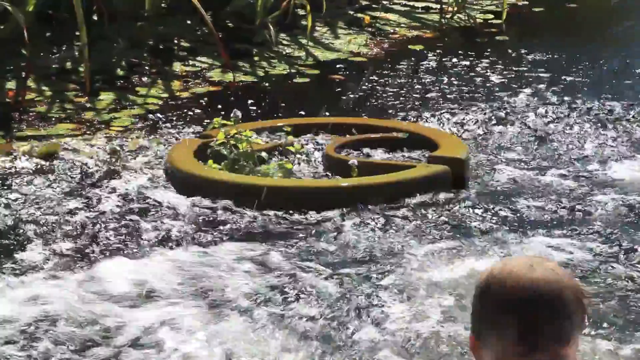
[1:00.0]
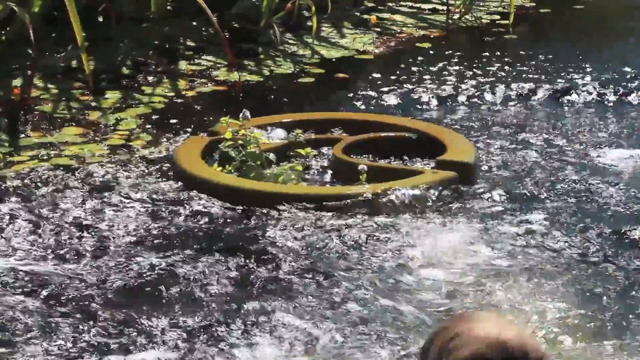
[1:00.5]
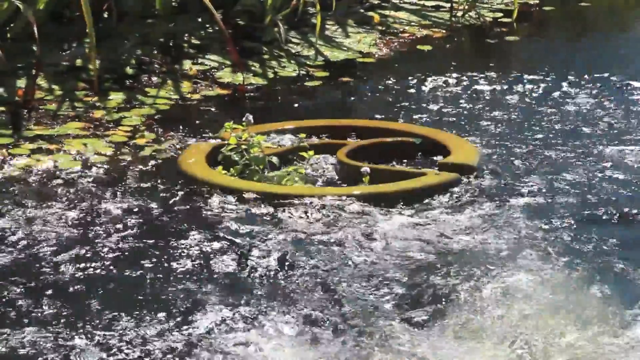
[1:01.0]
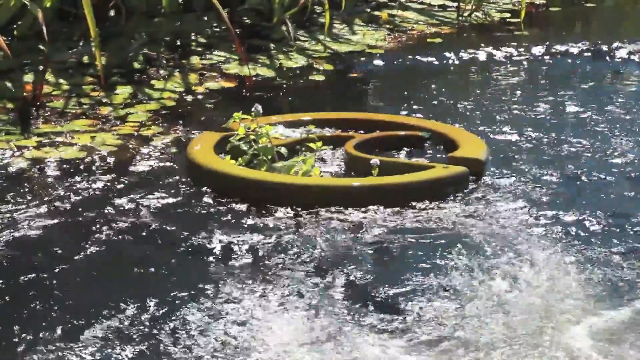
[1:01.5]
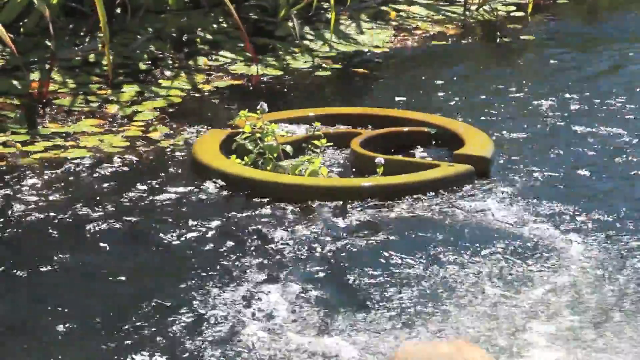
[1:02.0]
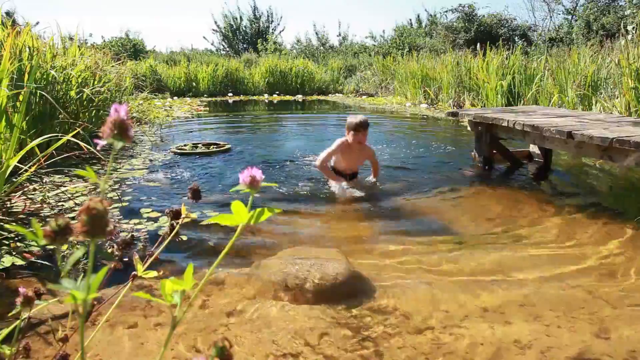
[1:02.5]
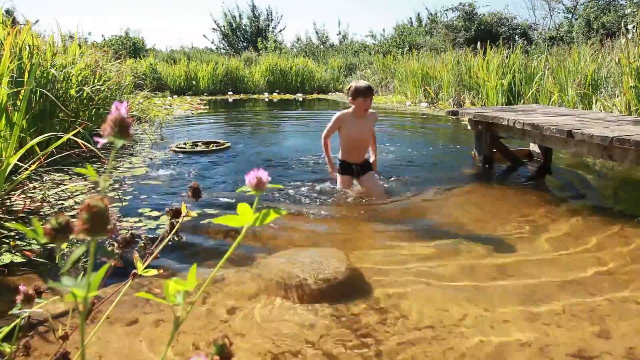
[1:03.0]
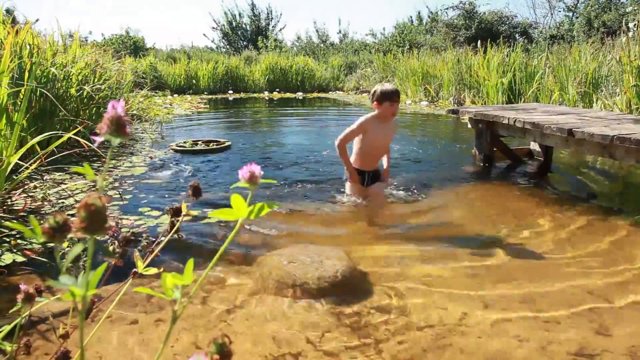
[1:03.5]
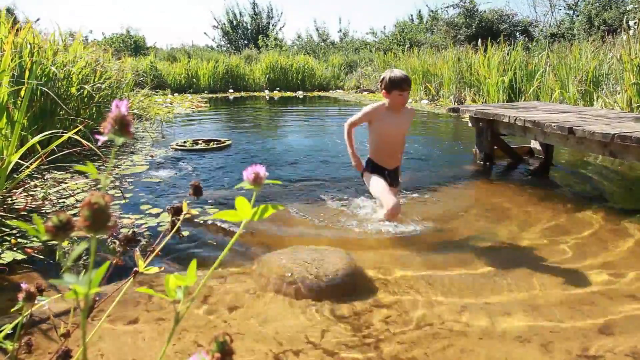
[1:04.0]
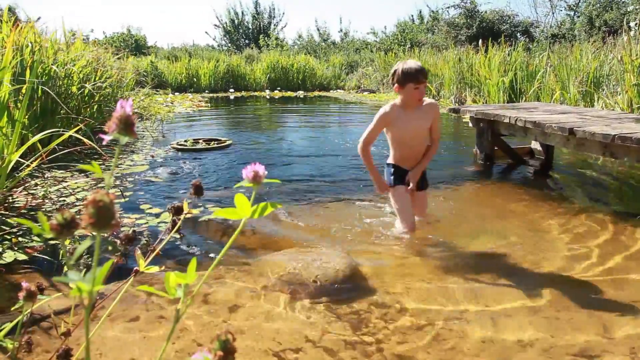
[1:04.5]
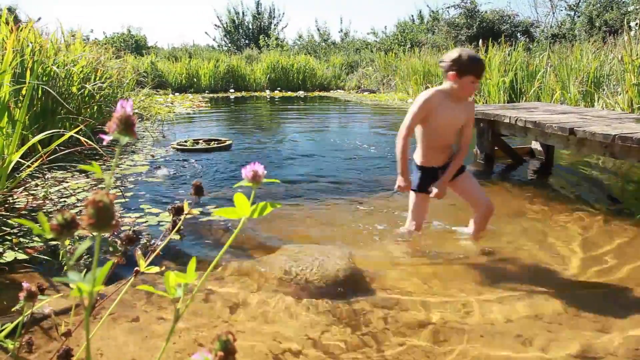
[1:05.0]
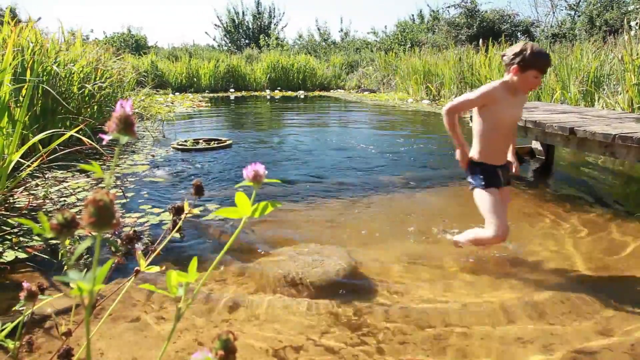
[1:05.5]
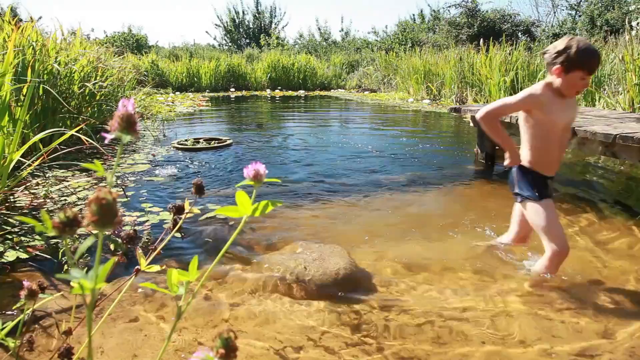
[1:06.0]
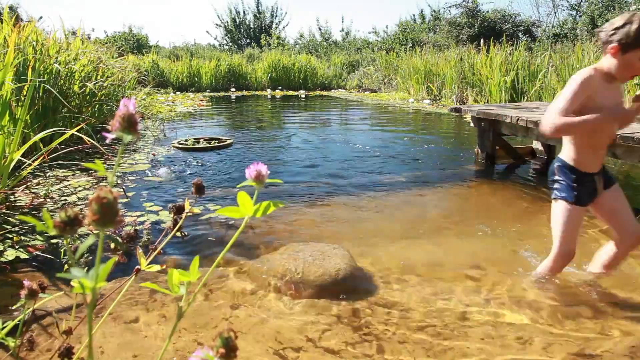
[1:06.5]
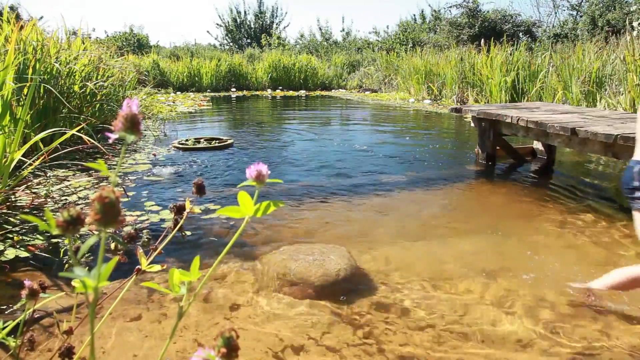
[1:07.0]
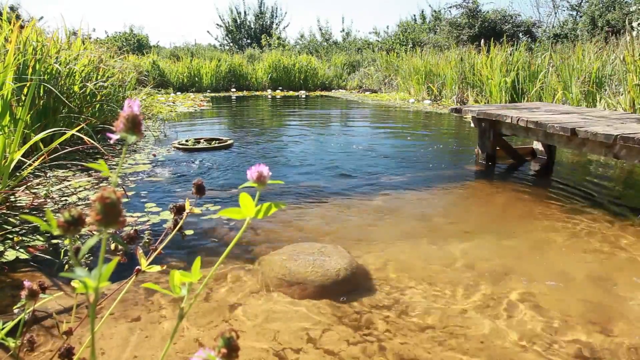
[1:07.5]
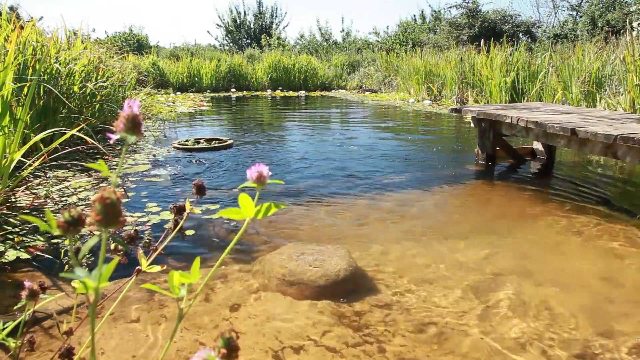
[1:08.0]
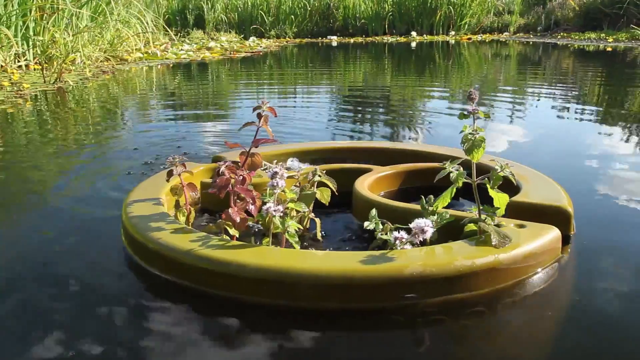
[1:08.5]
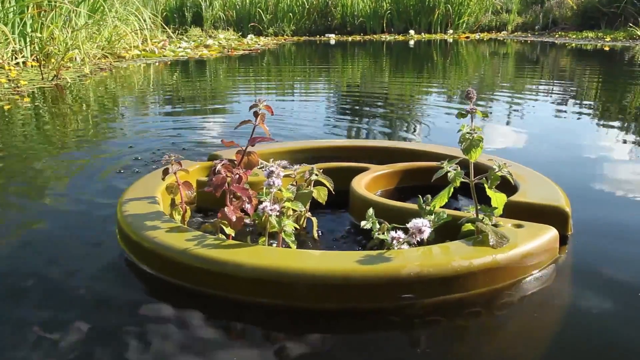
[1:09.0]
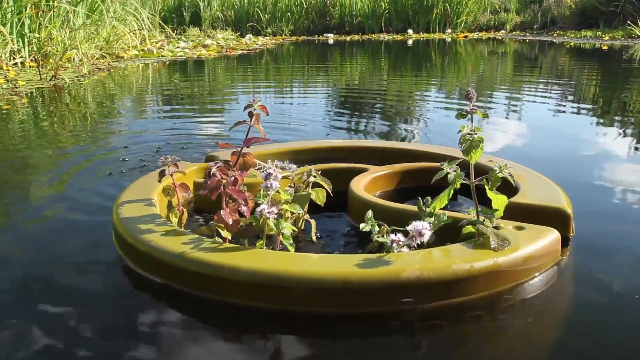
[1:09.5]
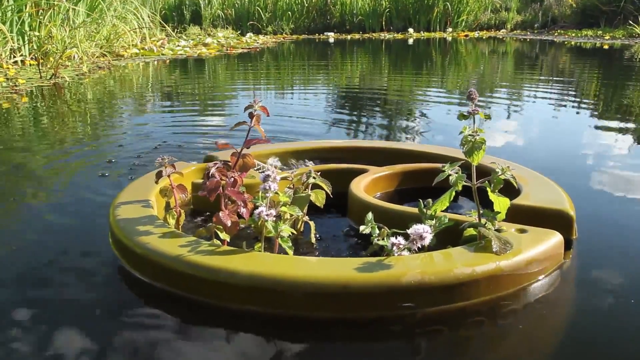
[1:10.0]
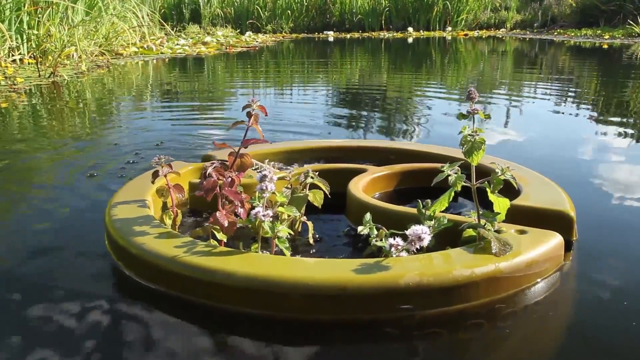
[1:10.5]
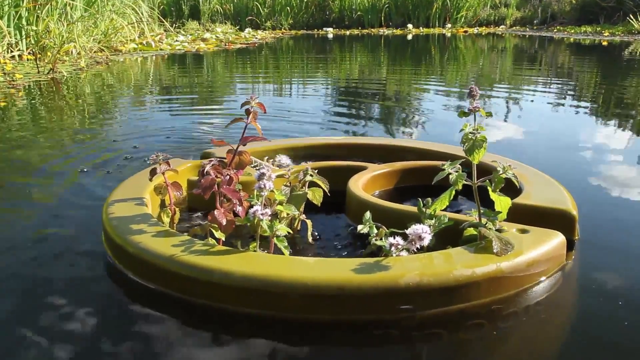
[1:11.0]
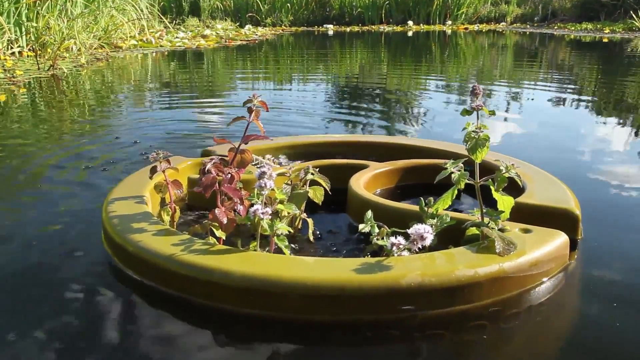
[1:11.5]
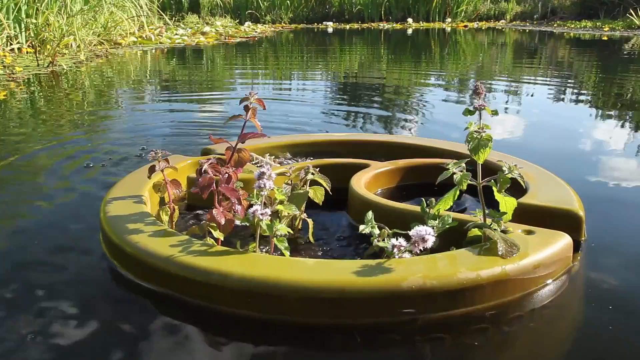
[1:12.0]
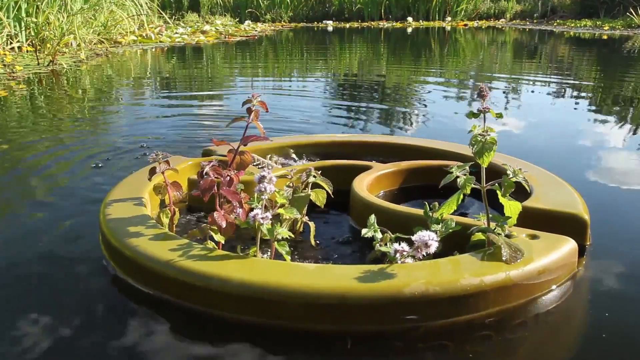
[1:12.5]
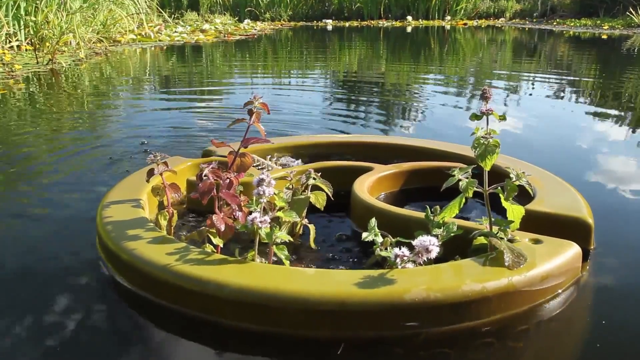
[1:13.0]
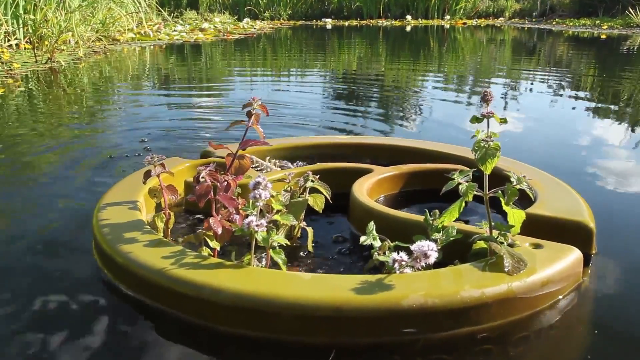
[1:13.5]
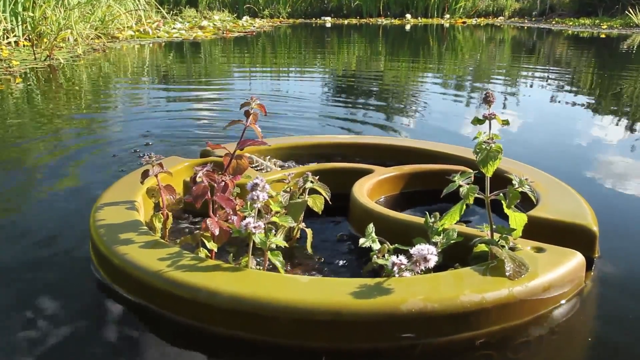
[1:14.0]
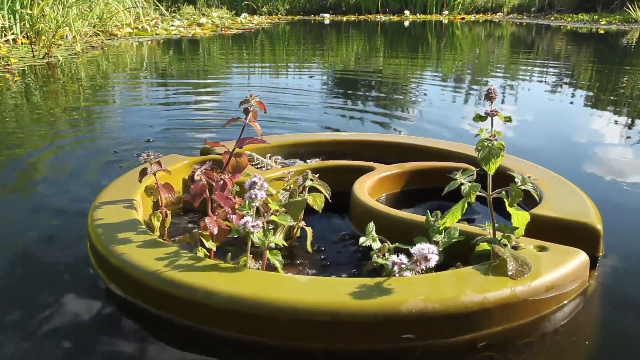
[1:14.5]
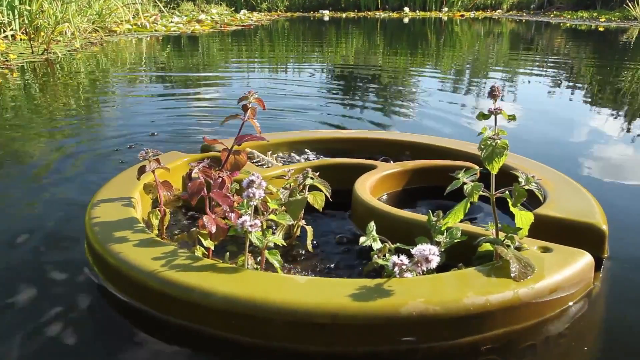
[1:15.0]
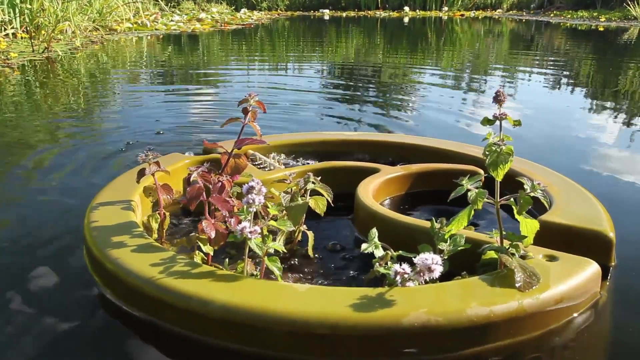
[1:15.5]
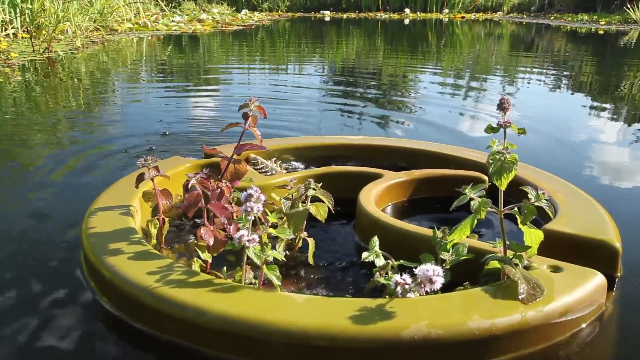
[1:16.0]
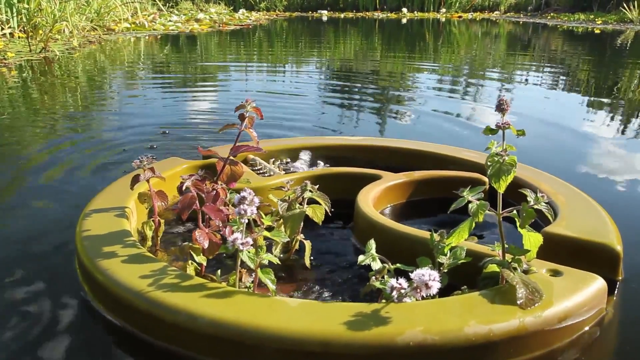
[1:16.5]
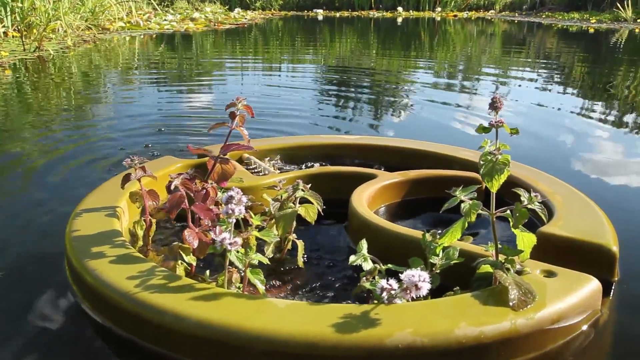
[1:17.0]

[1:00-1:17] There is a water body, possibly a pond or a pool, in the background, with green reeds at its side and apparently a few trees in the background. A wooden way leads into the pond or pool, and some flowers can be seen. Inside the pool there are some green plants and a circular object. A little boy in a black shirt is seen coming out of the water and walks out. The video then focuses on the object in the water. There are some plants on top of the object, and bubbles are coming out on the other side of it. The top of the object is divided, and some parts have no plants. Some plants with a circular, elliptical shape are on top of the water. The reeds and the sky are reflected in the water.